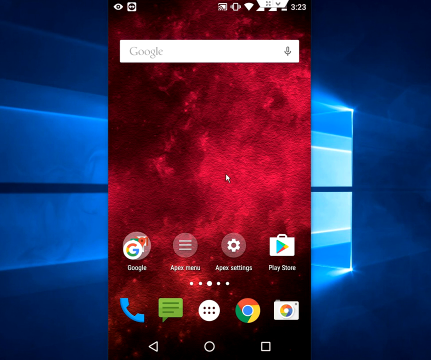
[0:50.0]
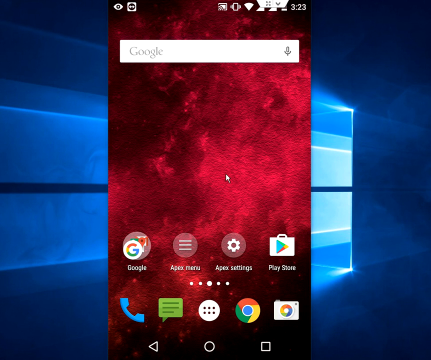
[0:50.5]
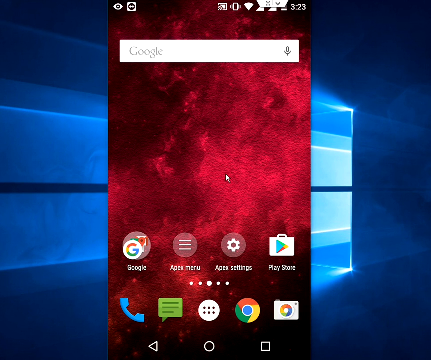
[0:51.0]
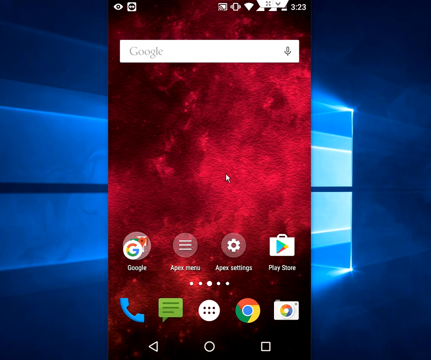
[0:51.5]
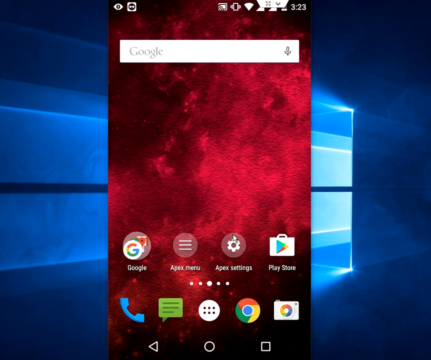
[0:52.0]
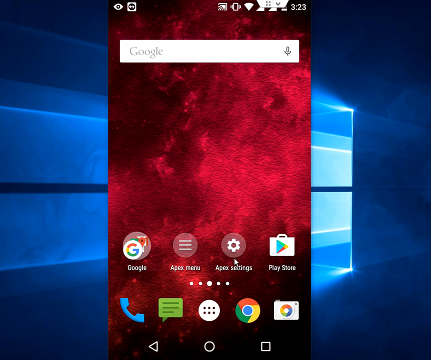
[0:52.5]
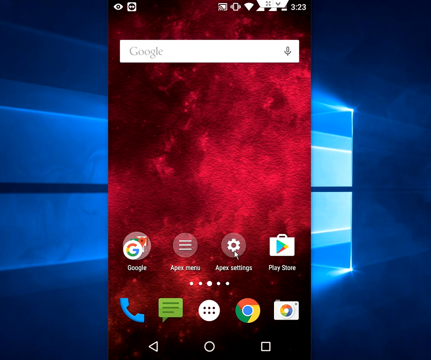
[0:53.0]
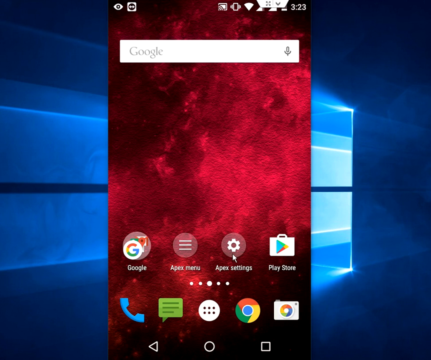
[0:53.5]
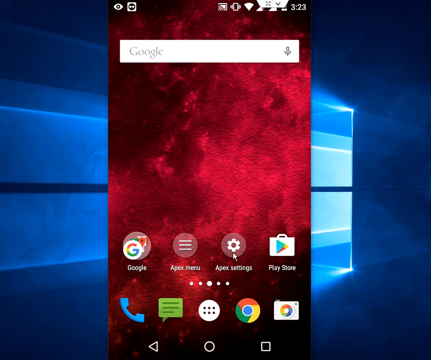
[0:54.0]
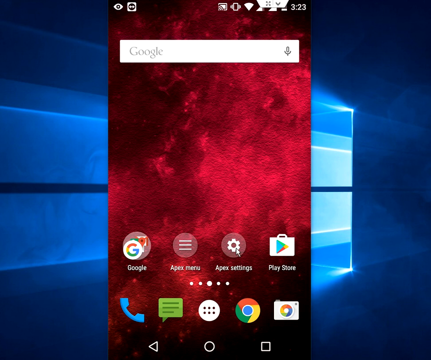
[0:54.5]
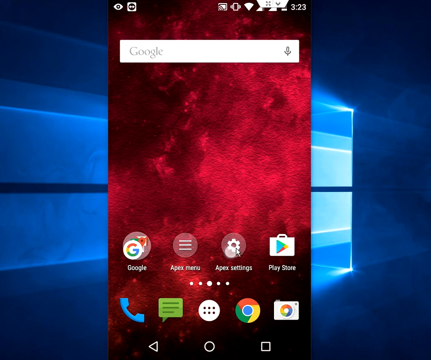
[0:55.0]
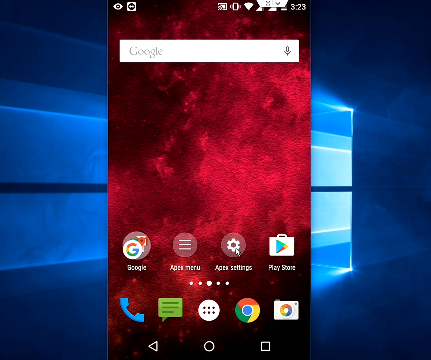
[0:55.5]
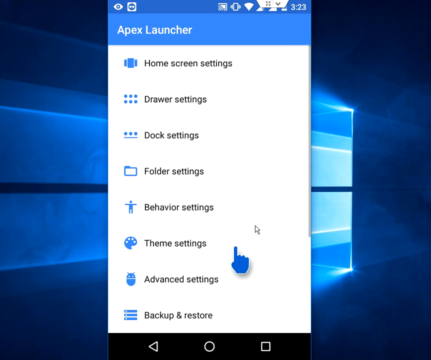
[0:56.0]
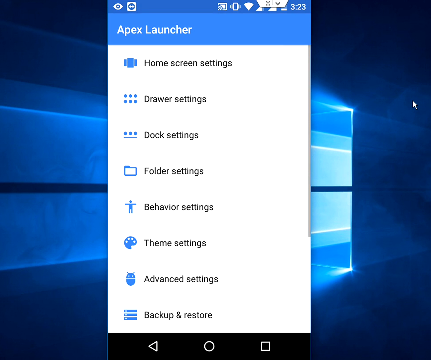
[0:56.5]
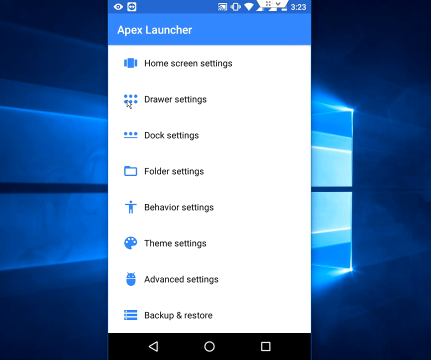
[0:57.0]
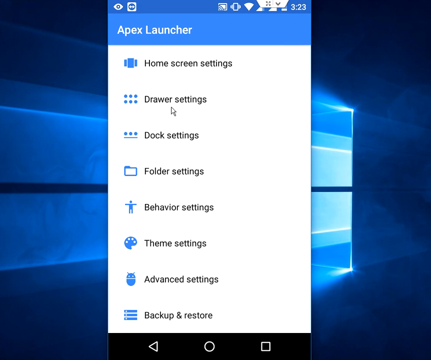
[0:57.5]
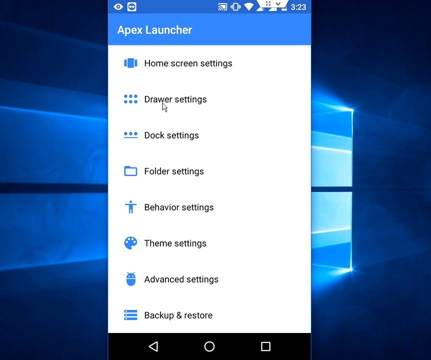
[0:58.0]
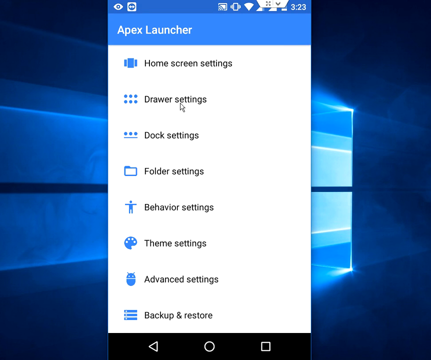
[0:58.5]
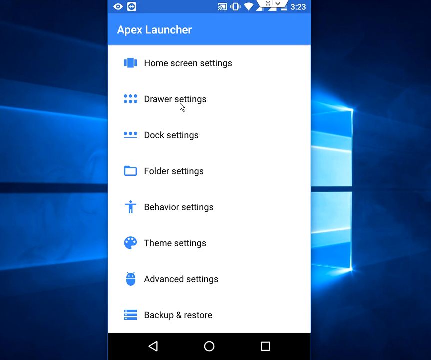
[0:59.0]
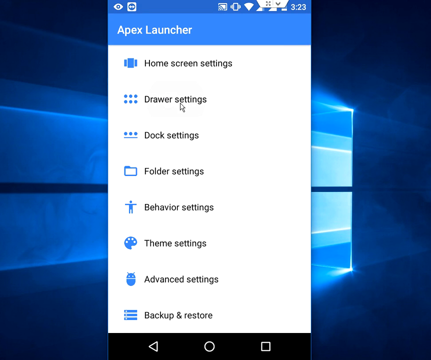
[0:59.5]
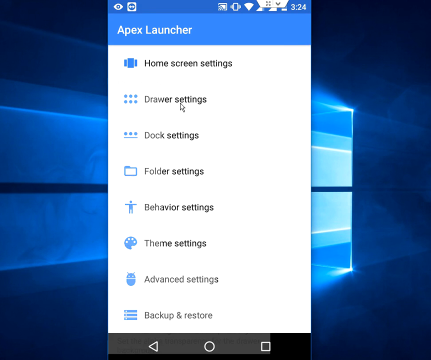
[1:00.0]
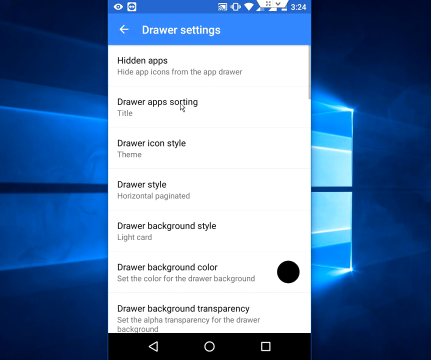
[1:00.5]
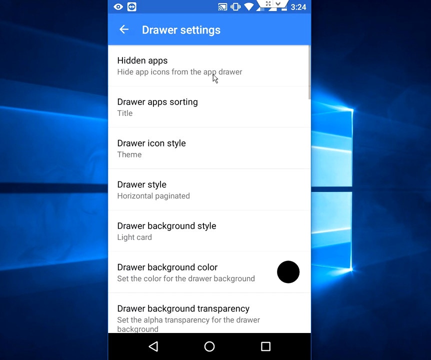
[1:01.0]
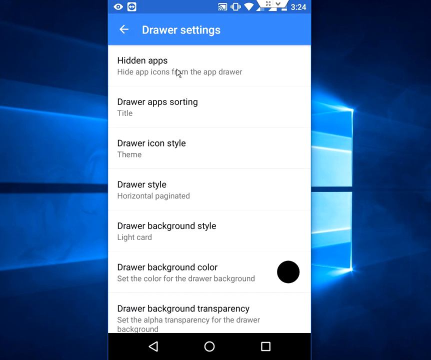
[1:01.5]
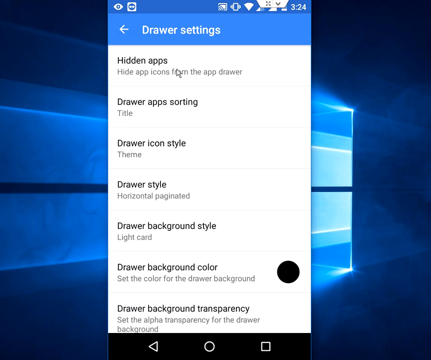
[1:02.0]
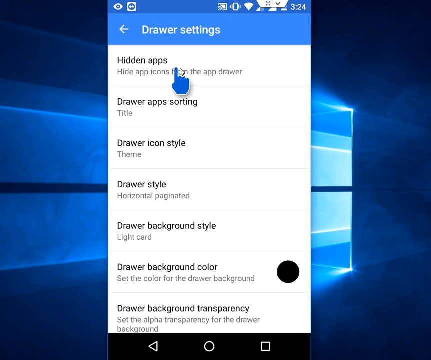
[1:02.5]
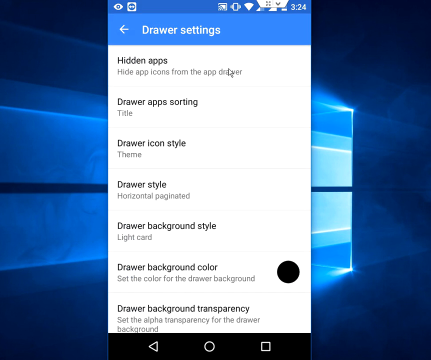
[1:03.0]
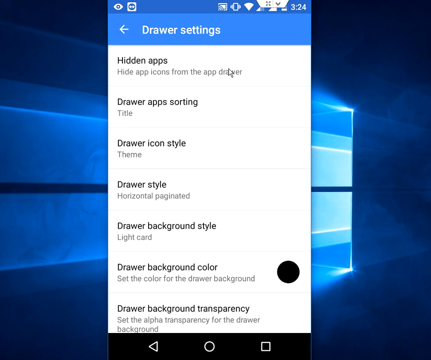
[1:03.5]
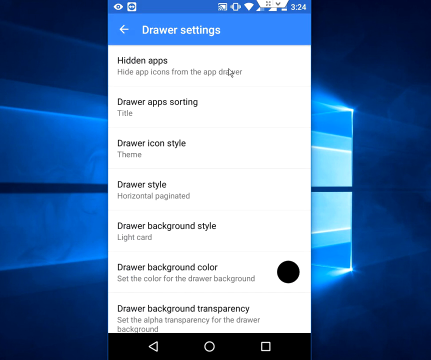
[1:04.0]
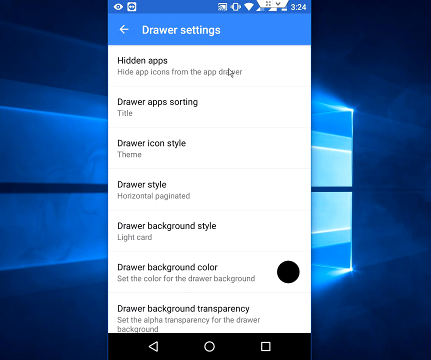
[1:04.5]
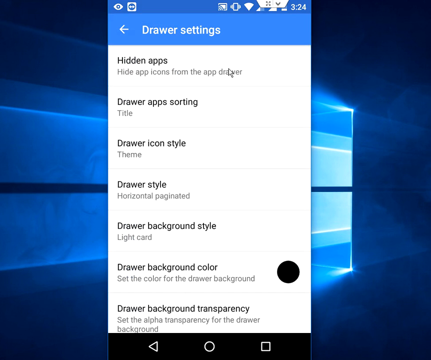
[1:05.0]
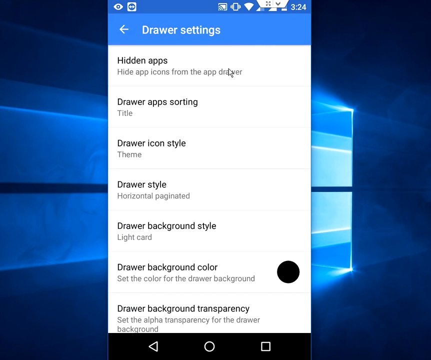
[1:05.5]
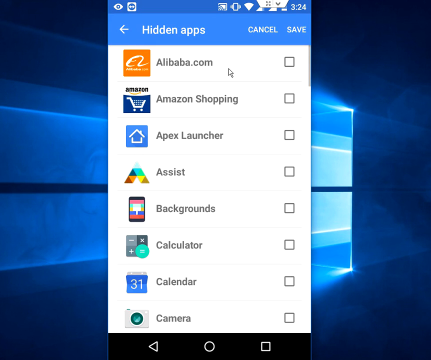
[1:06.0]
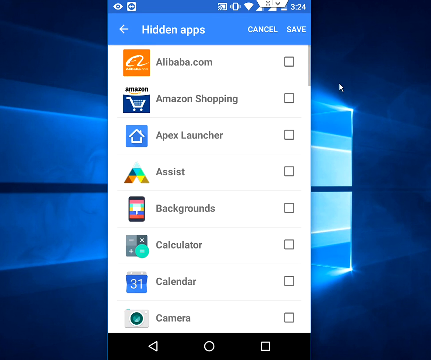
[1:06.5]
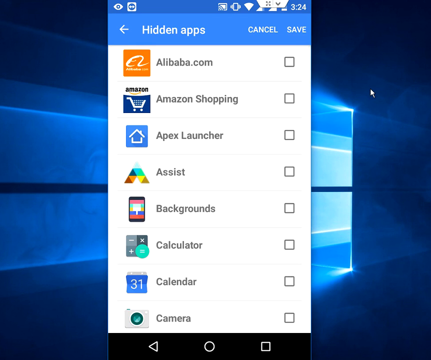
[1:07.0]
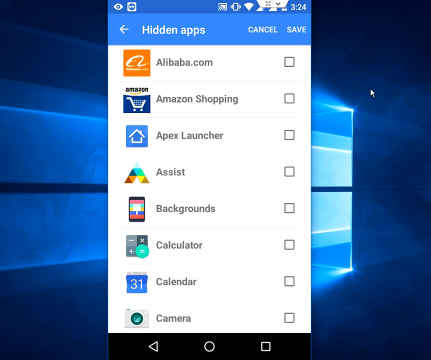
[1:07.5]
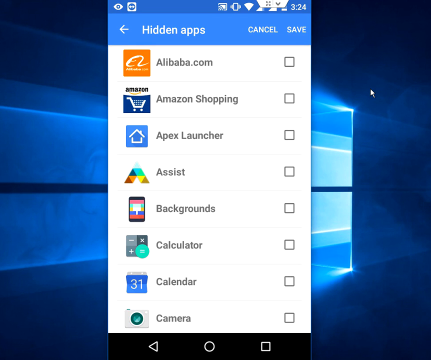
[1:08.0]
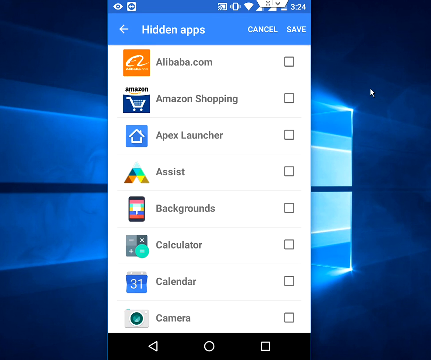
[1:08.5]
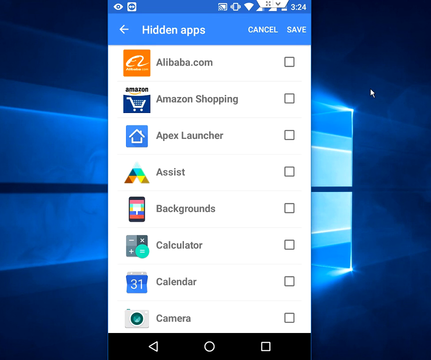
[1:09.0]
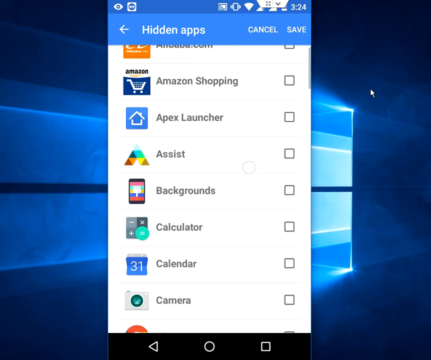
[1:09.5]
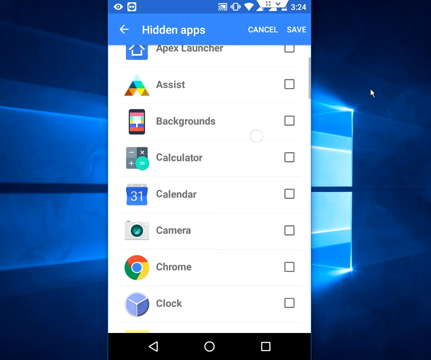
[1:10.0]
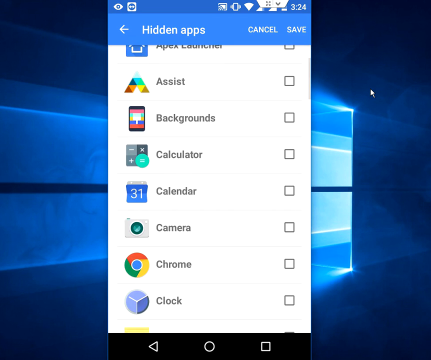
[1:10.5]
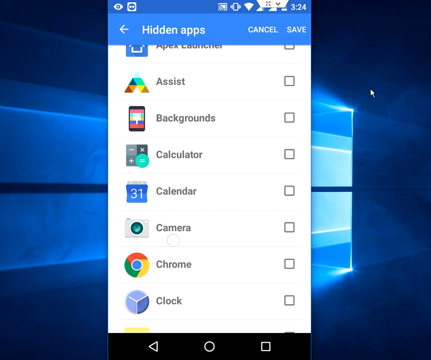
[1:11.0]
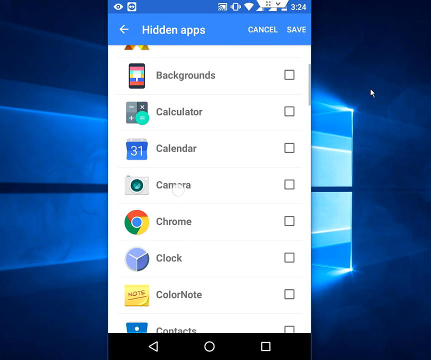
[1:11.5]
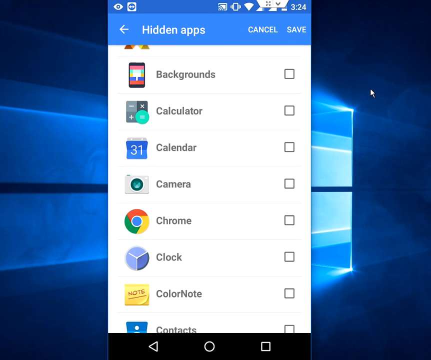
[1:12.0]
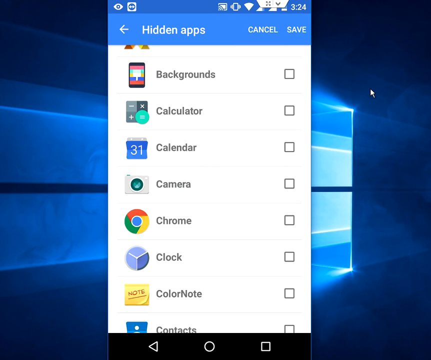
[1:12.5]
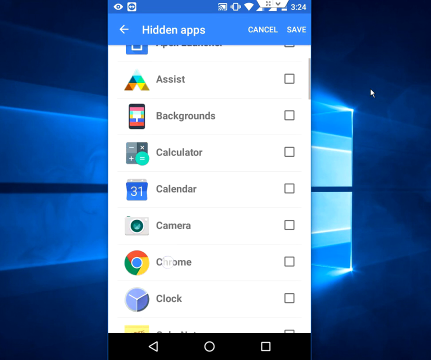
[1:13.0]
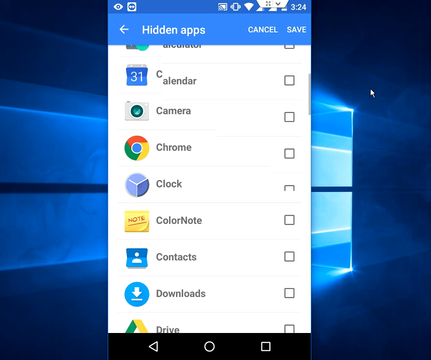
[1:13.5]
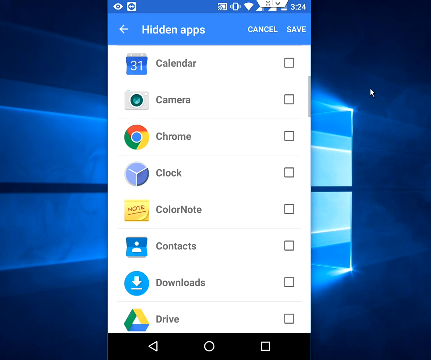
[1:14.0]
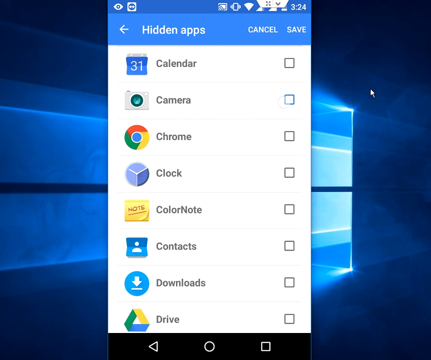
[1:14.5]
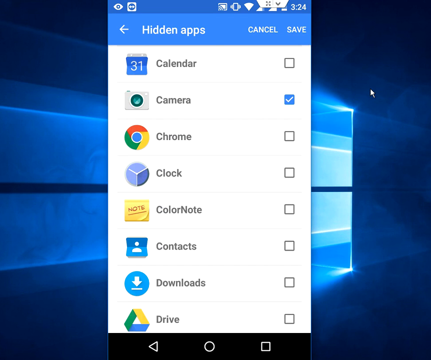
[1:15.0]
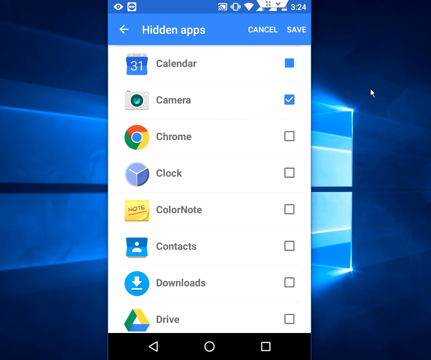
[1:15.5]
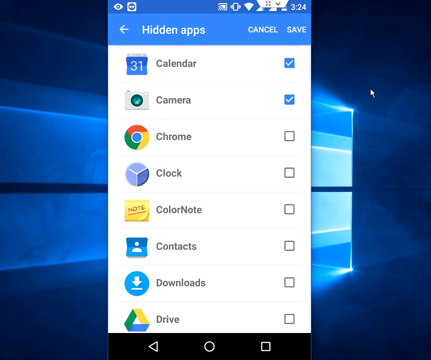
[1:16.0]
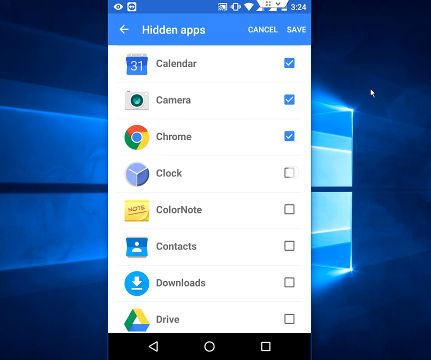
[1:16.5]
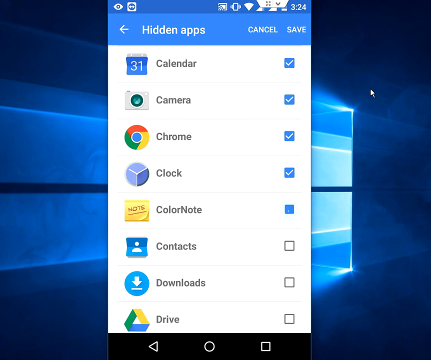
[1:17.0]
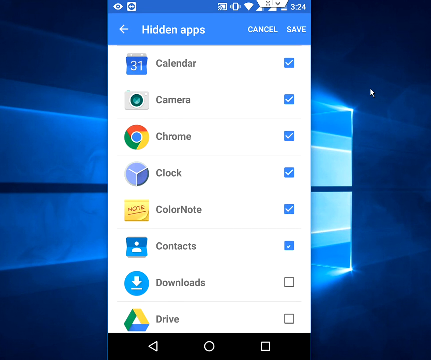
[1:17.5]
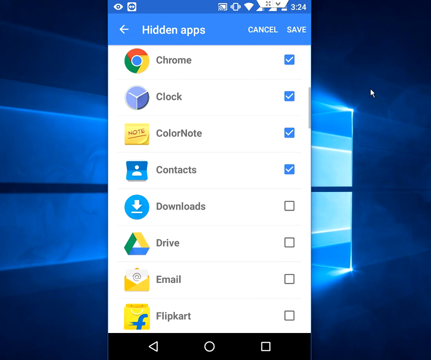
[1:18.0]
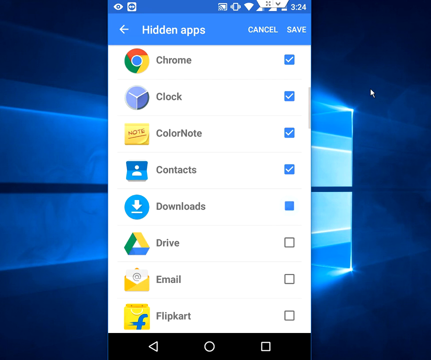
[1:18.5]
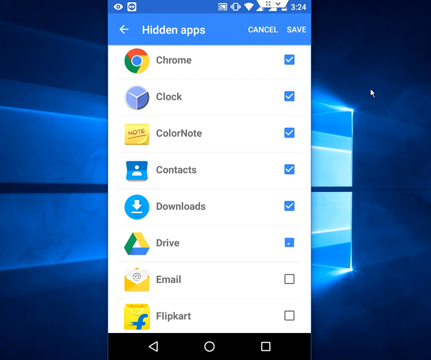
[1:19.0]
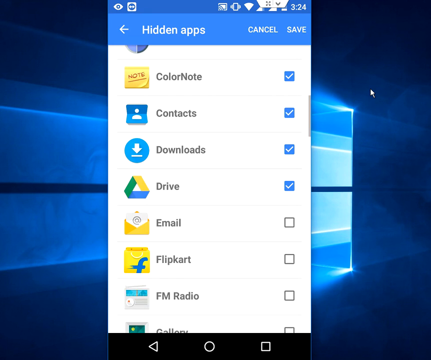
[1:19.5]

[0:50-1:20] The new home screen has a red, sort of dark red and black cloud background. The user clicks the gear button labeled "Apex settings", and a main menu of settings appears: home screen settings, drawer settings, dock settings, folder settings, behavior settings, theme settings, event settings, and finally backup and restore. Each has a logo: home is like a home screen, drawer is six dots, dock is three dots, both placed horizontally, folder shows a folder, behavior shows a person stretching their arms out, theme shows something like a paint tray, events shows an Android, and backup shows what look like stacked servers. The user goes to drawer settings, hovers over the hidden apps option, and clicks on it, bringing up the hidden apps list: Alibaba, Amazon Shopping, Apex Launcher, Assist, Backgrounds, Calculator, Calendar, Camera. At the top, beside "hidden apps", there are cancel and save options. The user scrolls through the list, showing more below Camera, such as Chrome, Clock, Colored Note, Contacts, Downloads, and more.